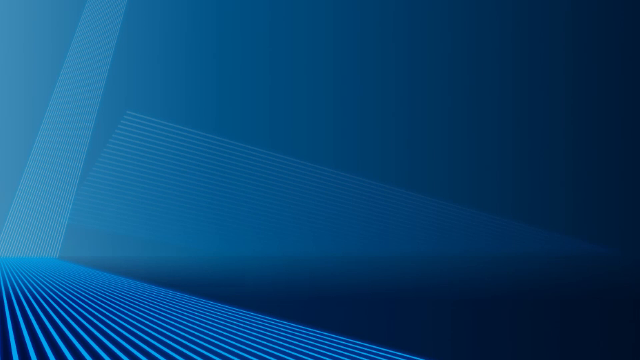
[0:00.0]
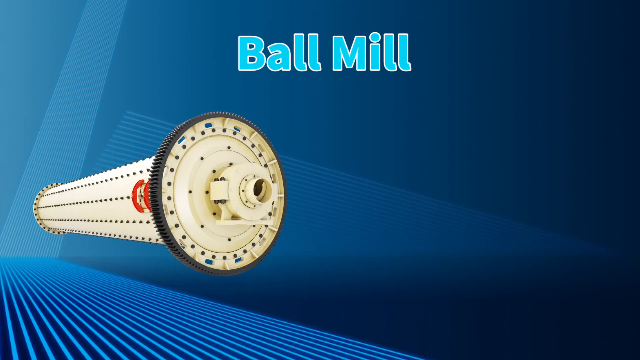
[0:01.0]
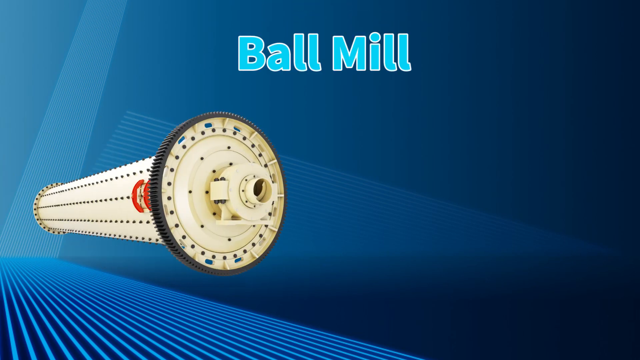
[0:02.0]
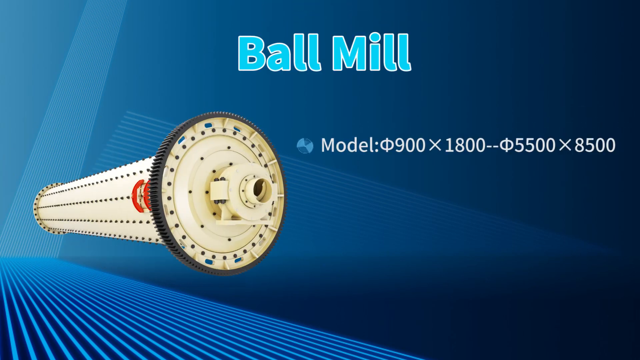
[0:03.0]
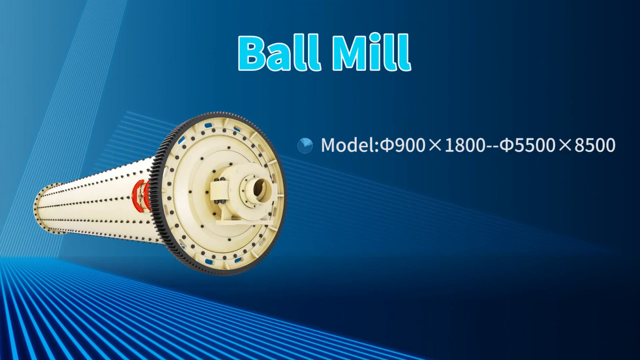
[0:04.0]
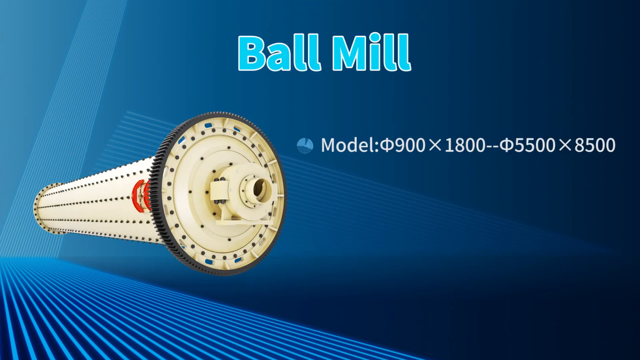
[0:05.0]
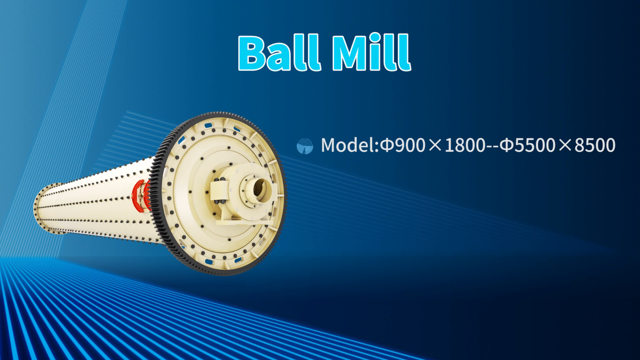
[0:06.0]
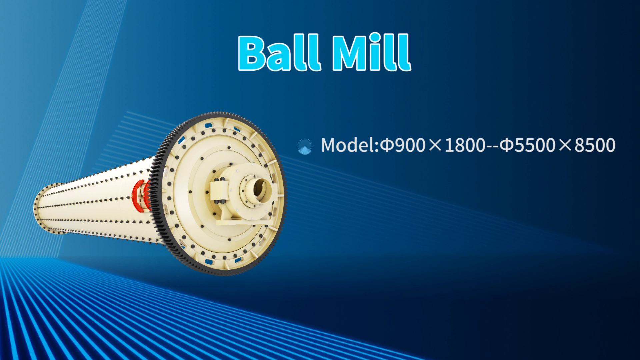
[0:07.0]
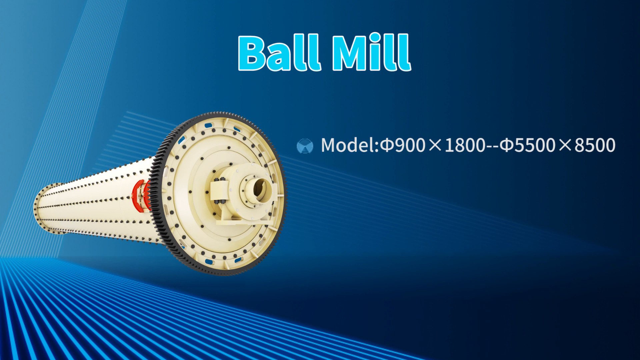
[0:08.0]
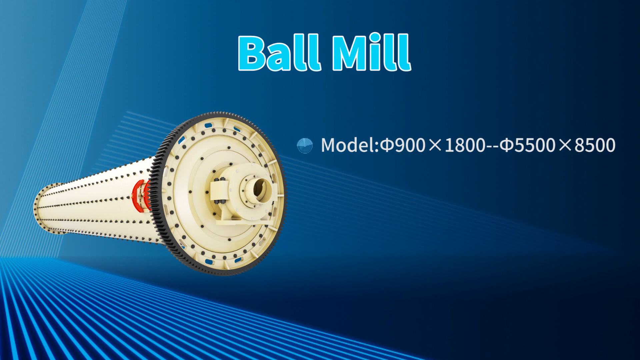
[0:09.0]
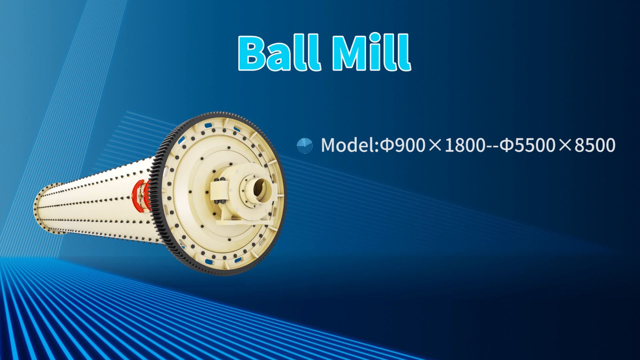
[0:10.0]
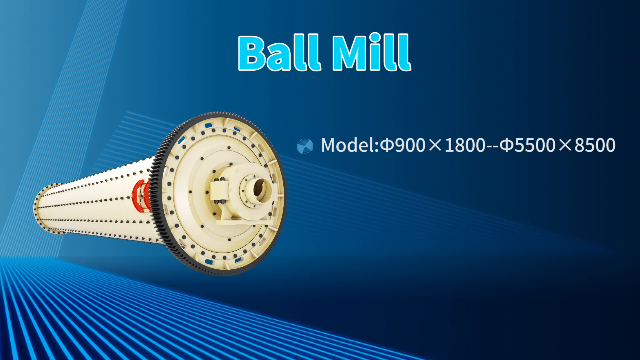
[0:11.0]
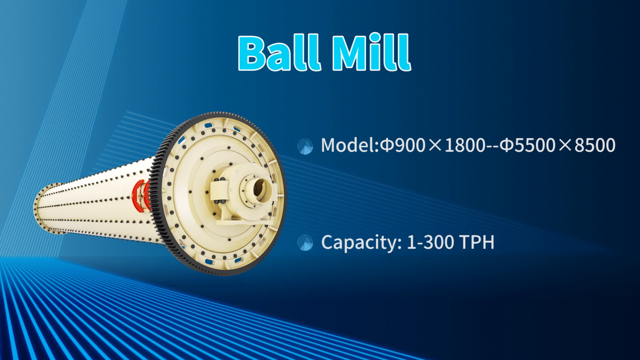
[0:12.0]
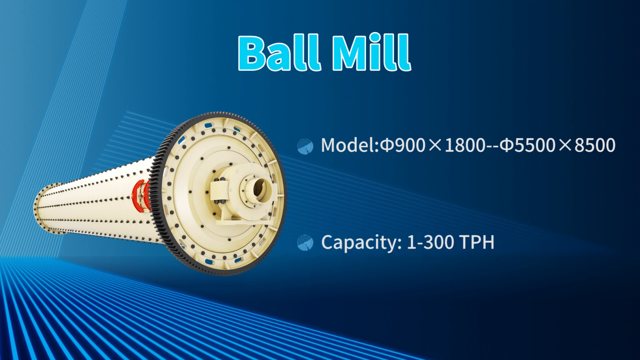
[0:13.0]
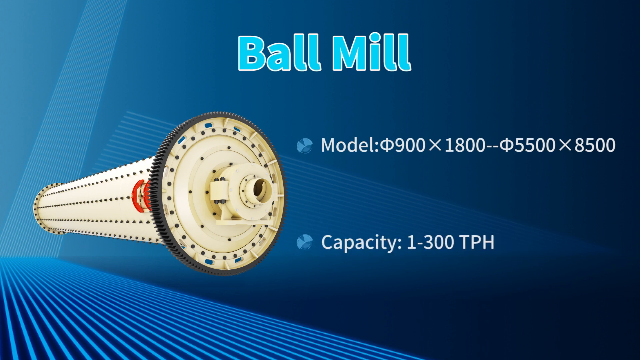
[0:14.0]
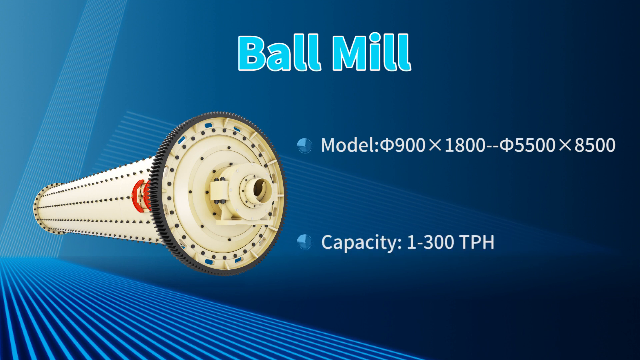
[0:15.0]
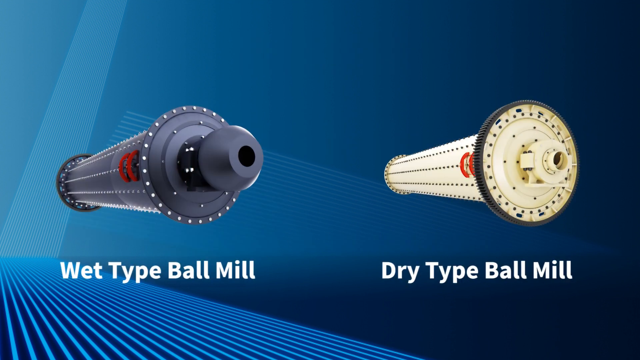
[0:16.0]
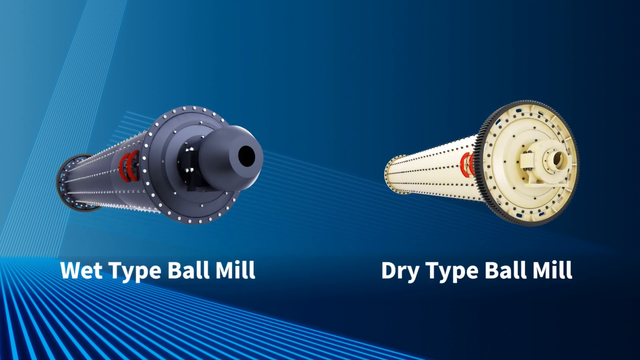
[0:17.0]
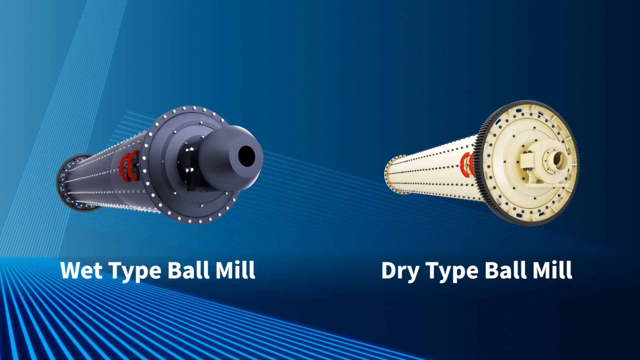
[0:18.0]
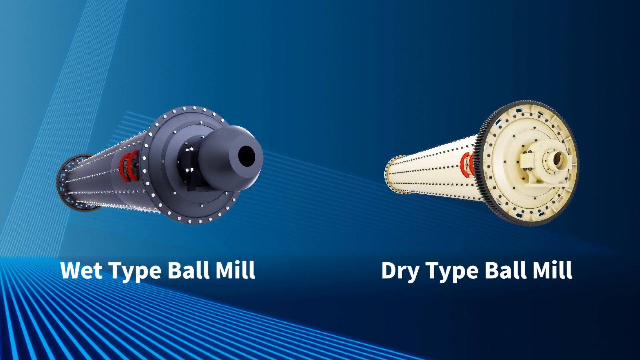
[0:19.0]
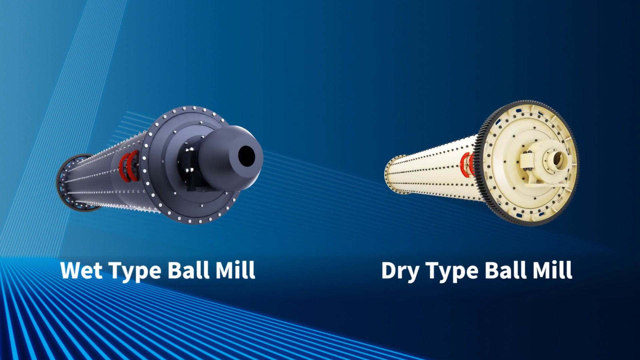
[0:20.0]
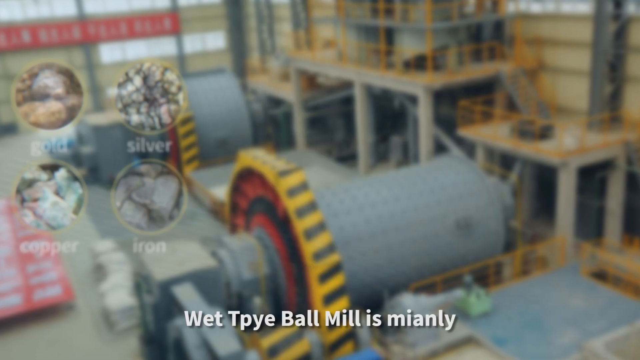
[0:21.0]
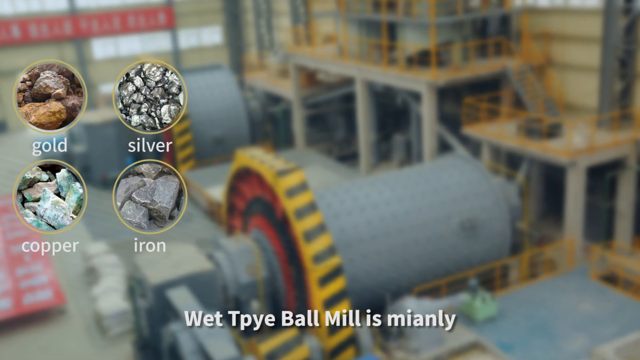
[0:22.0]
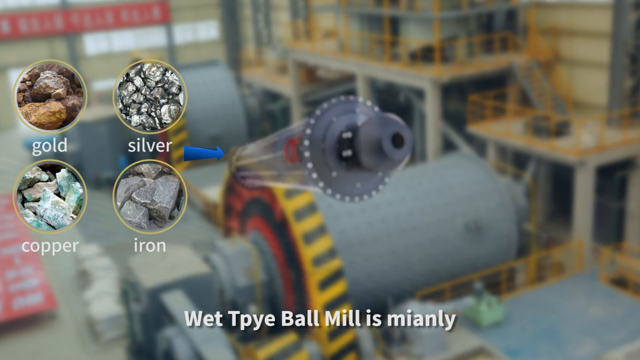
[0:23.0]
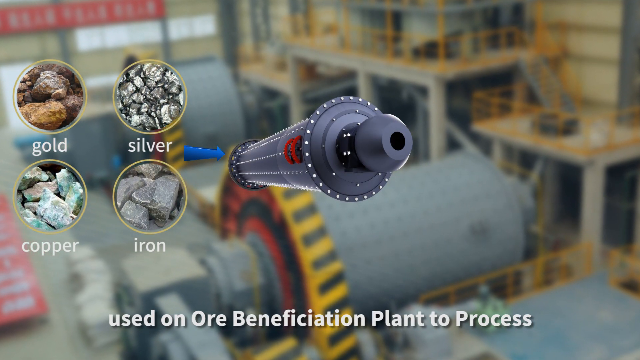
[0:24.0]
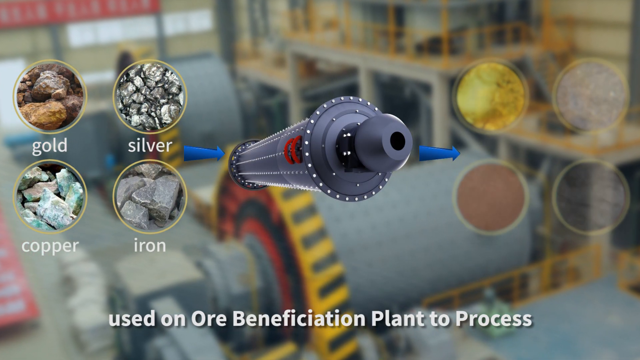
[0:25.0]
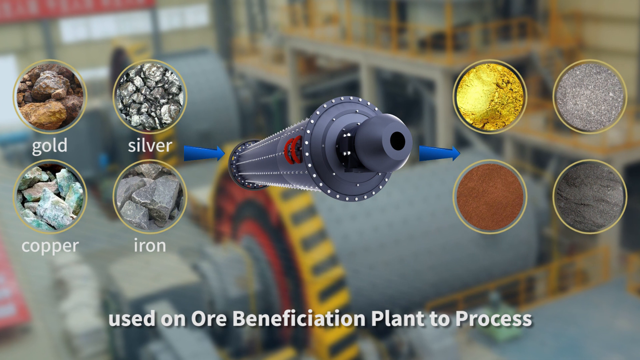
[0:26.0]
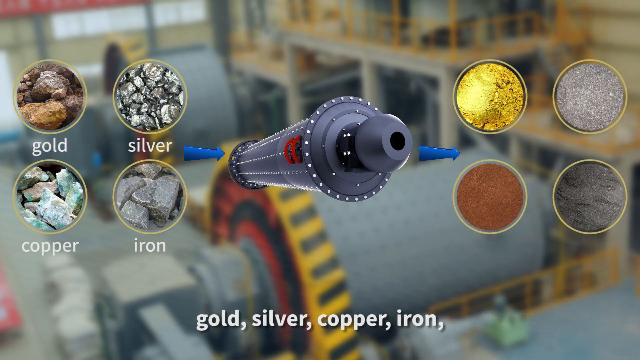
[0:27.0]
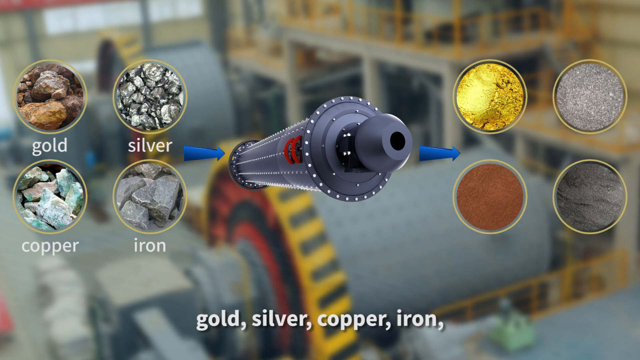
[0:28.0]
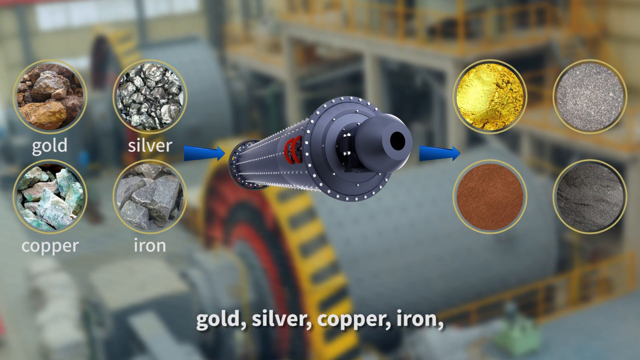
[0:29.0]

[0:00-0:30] A blue background with line designs on it opens the video. A long beige pipe covered in dots slides onto the screen from the left, and at the top, in light blue font, the words "ball mill" appear. With the image of the ball mill on the left side of the screen, a bullet point appears on the right giving the machine's model number, followed underneath by a second bullet point giving the capacity of the ball mill. Everything then disappears and two ball mills appear: the one seen before is now on the right, labeled "dry type ball mill" underneath, and on the left is one labeled "wet type ball mill". The wet type looks fairly similar to the dry type but is gray with white dots, while the dry type is a kind of beige with kind of dark dots. Next, an out-of-focus image from a factory of sorts appears on the left side of the screen, along with various ores: gold, silver, copper, and iron. A diagram with arrows shows the ores going into the mill and coming out the other side as more refined ores. Subtitles run along the bottom of the screen.